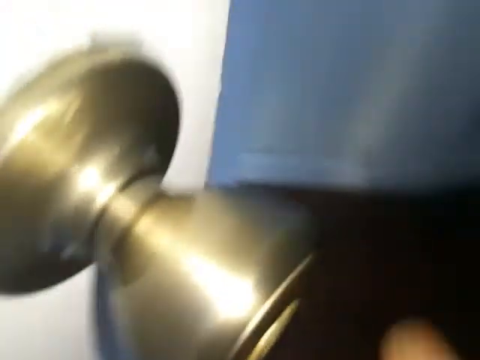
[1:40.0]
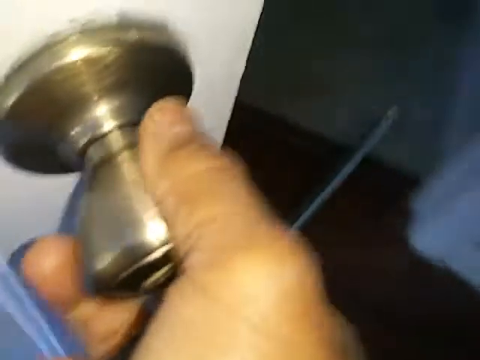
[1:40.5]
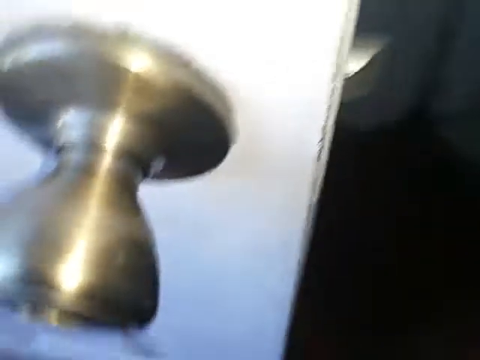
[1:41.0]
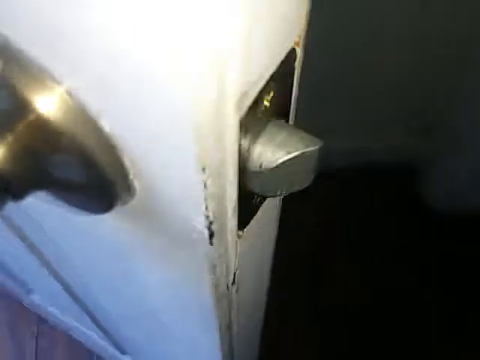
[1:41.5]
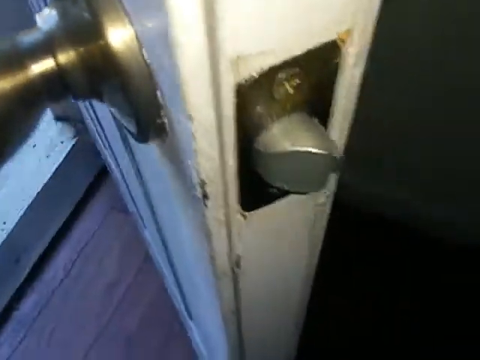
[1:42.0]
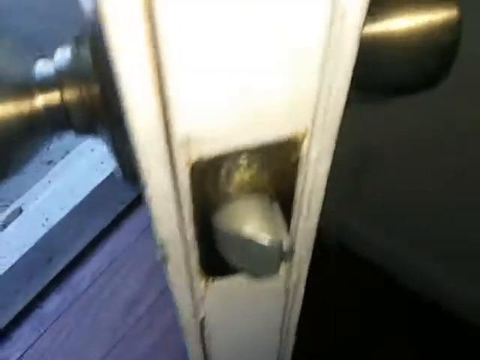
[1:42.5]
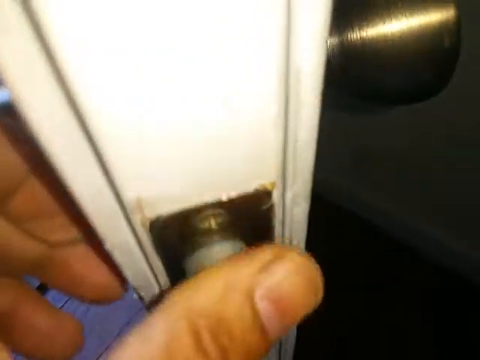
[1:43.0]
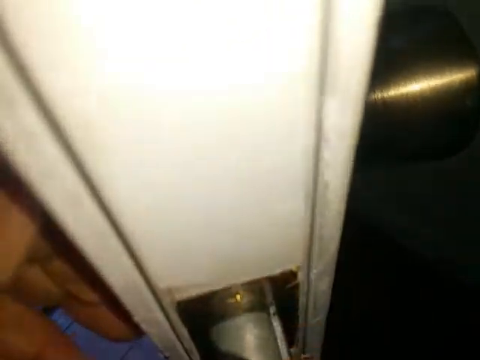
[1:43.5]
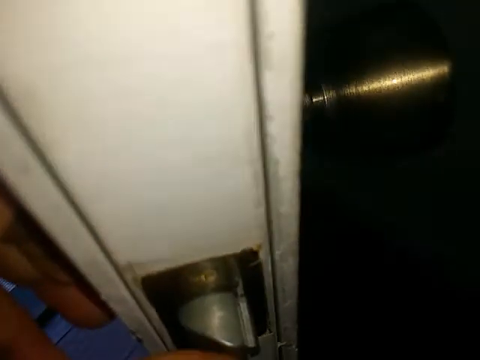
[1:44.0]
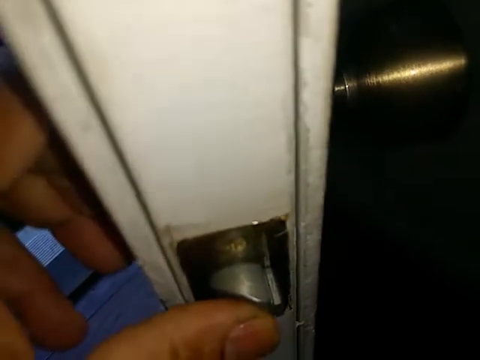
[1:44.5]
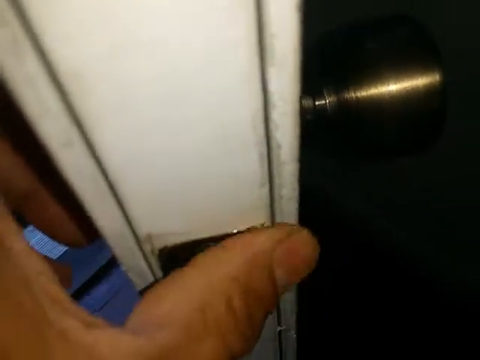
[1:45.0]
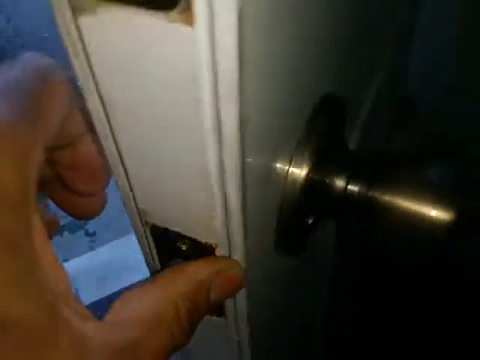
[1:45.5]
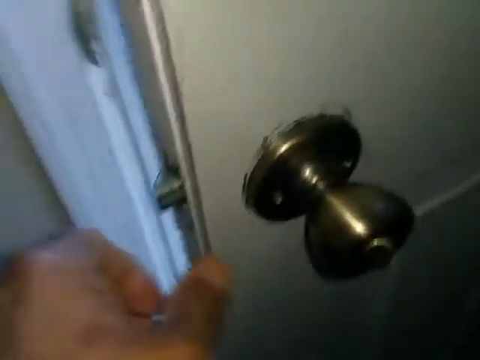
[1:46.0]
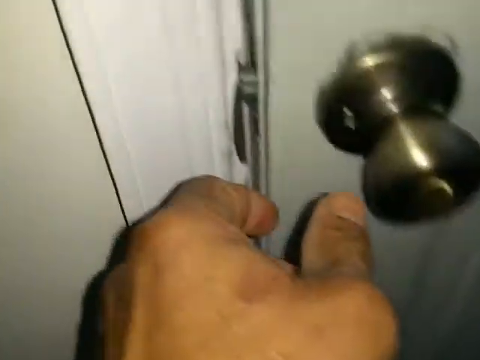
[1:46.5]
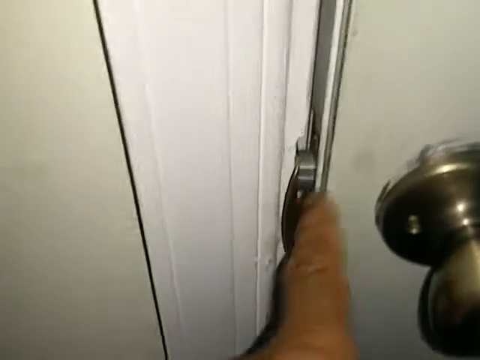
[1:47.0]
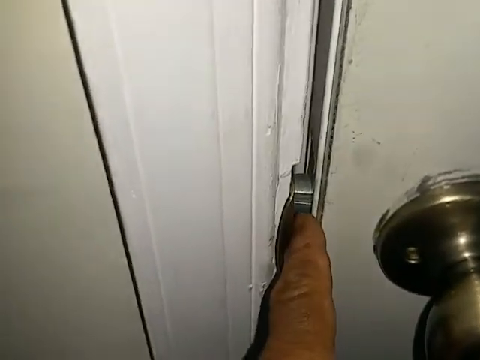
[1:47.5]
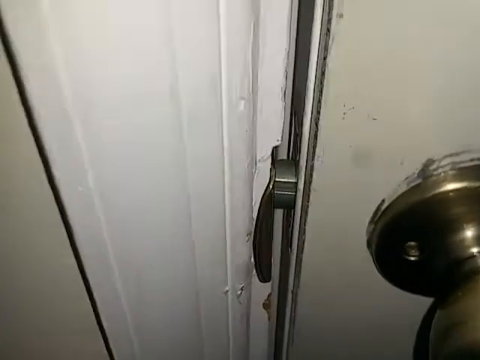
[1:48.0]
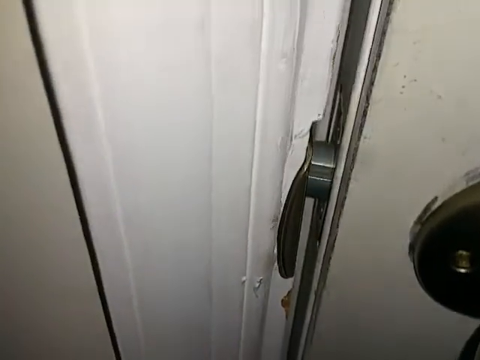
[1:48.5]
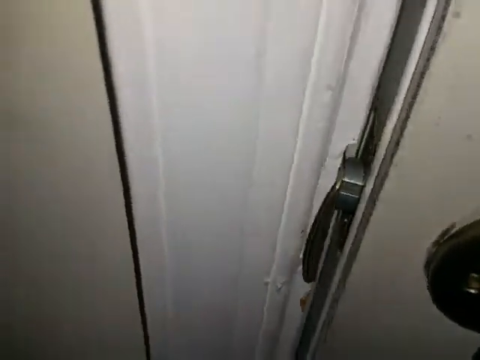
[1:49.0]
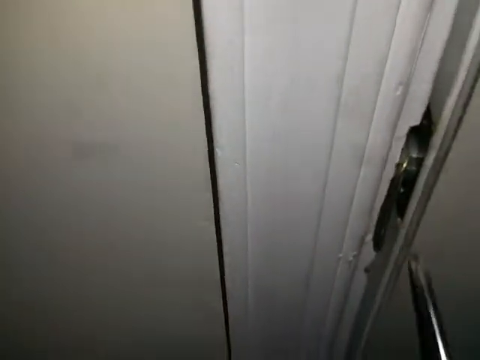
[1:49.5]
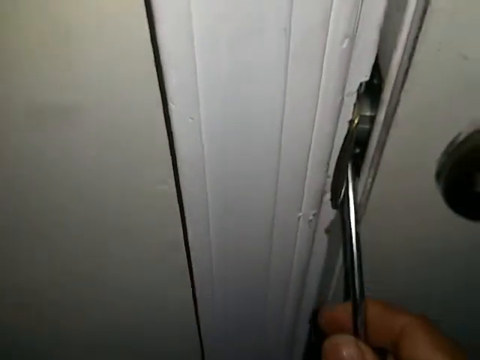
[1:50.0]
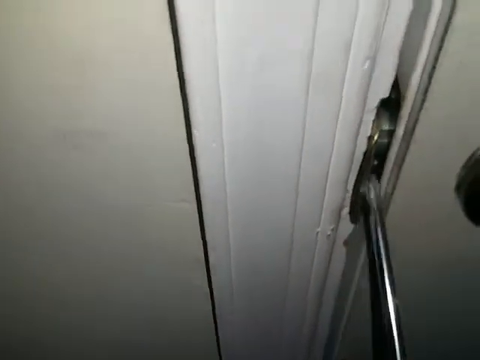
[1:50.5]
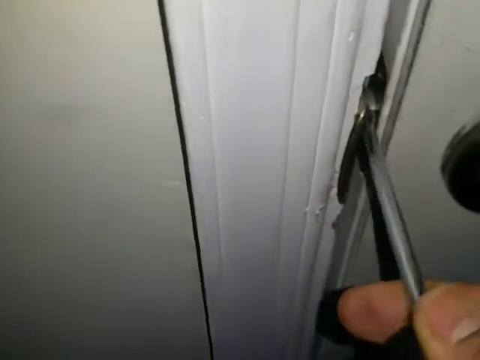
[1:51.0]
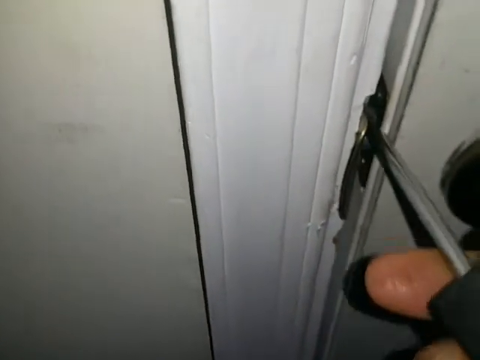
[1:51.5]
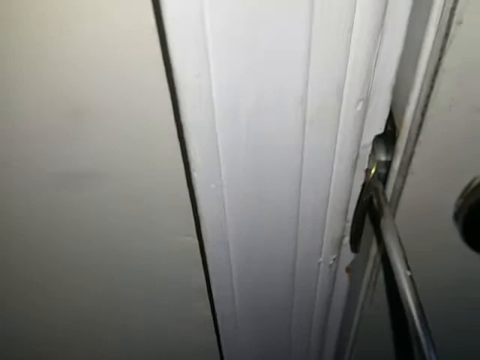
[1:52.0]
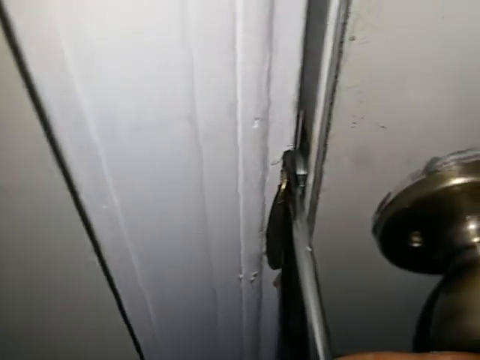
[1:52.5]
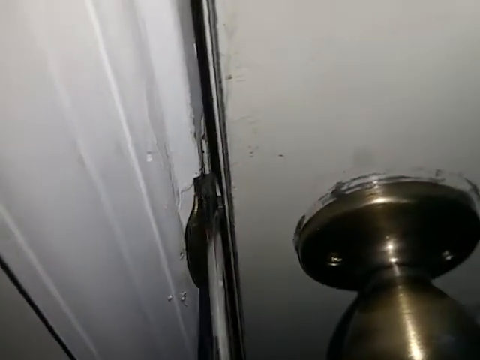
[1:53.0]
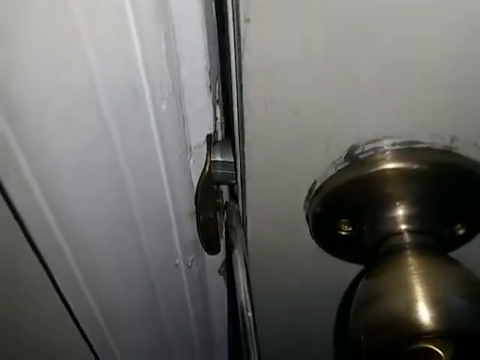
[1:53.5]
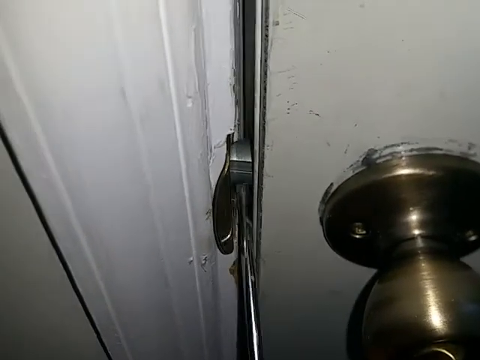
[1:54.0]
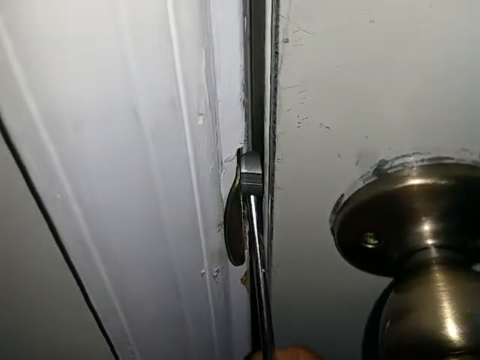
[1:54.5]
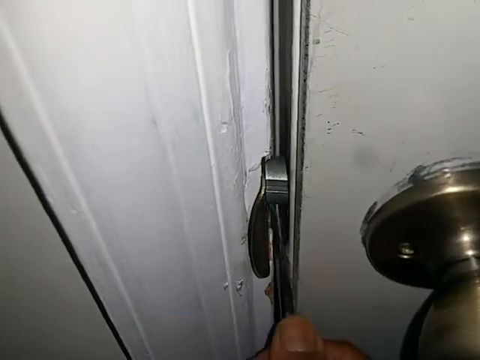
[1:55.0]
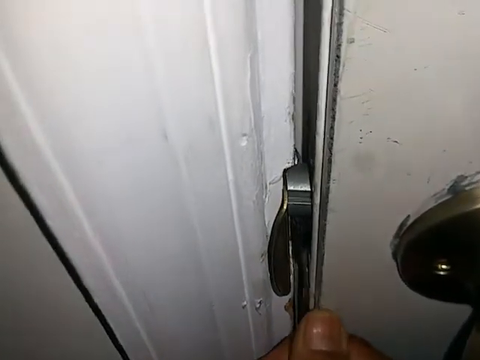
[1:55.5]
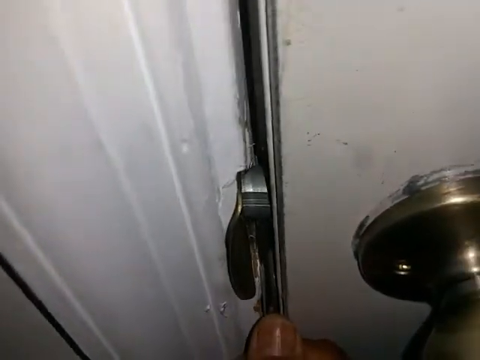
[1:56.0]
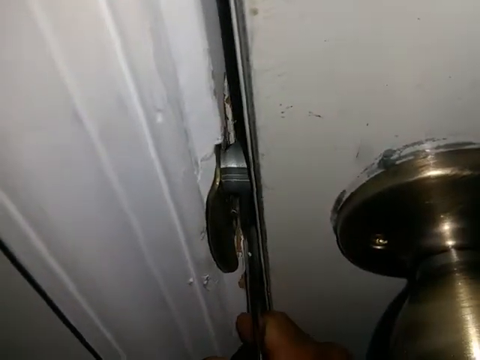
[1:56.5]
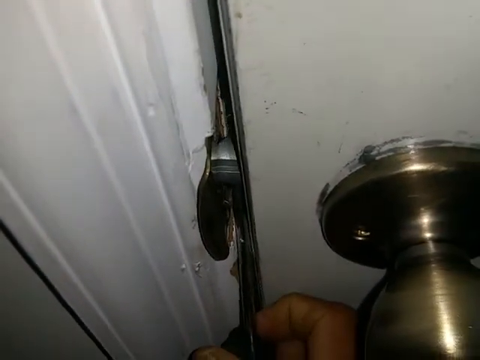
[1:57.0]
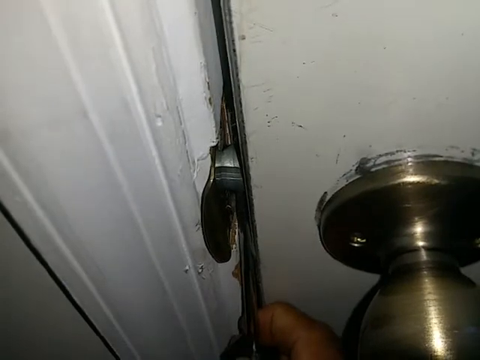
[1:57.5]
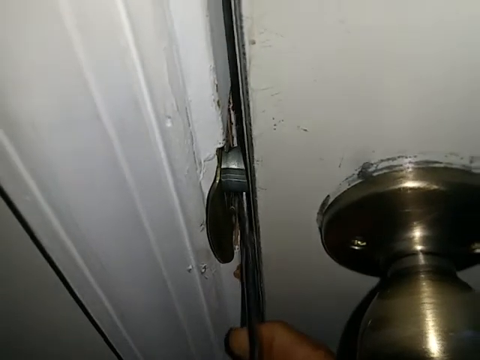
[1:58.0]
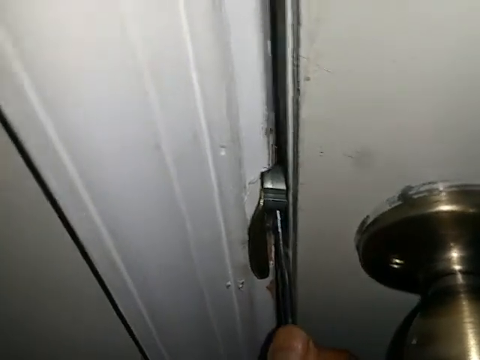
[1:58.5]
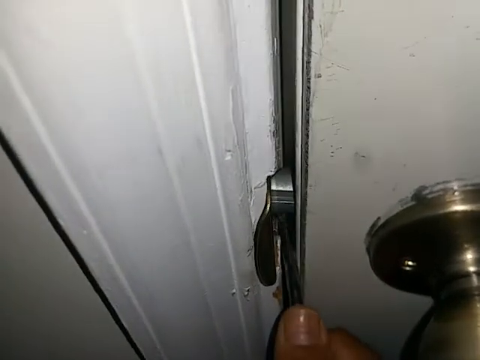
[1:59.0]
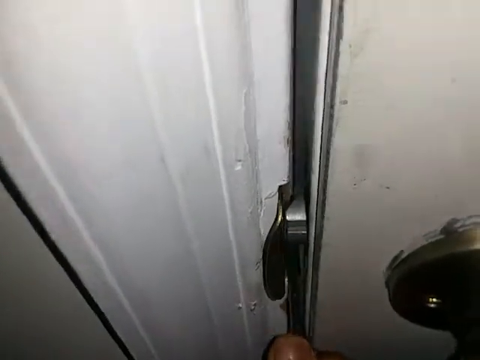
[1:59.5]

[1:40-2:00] The man goes back into the house, holding the doorknob with his right hand before pressing on the latch with his left hand and closing the door. The screwdriver pushes against the gap between the door and the door frame, angling under the door latch and behind the frame. The man angles the screwdriver upward to push against the latch from behind, opening the door. The latch appears to be faulty and not locking, allowing the screwdriver to work the latch and open the door without a key or turning the handle, helped by the large gap between the door and the door frame.